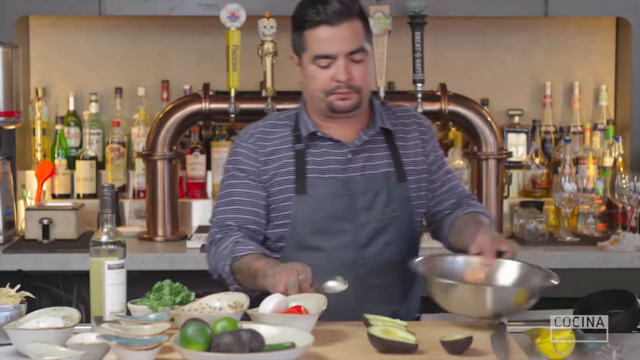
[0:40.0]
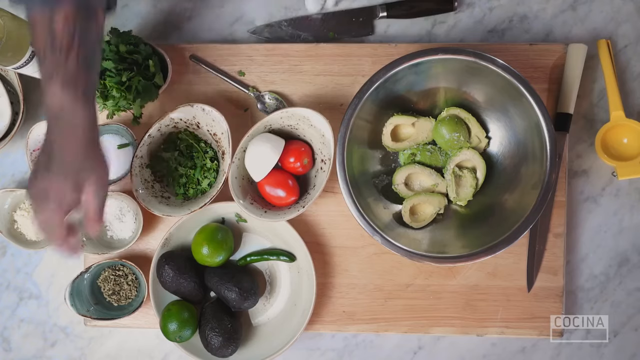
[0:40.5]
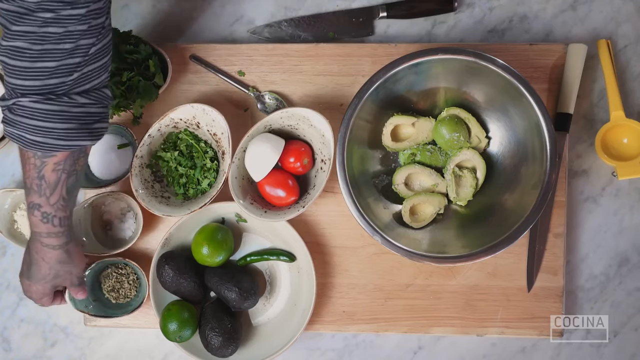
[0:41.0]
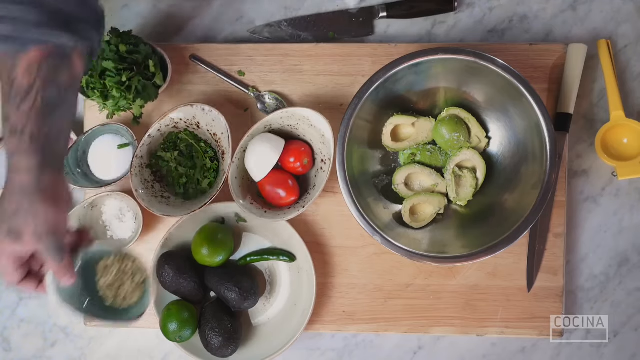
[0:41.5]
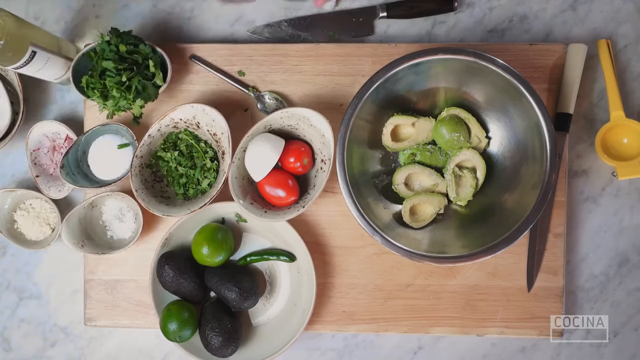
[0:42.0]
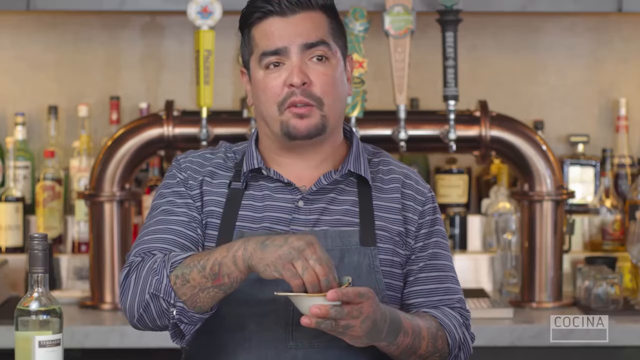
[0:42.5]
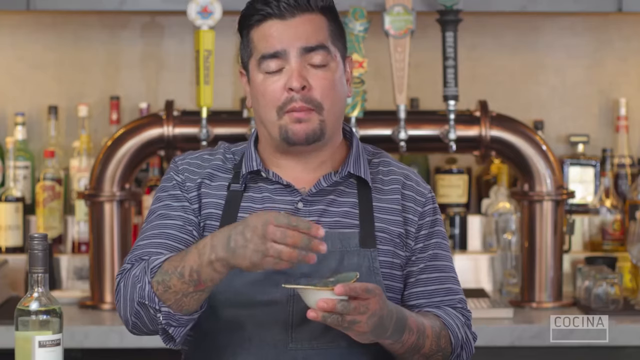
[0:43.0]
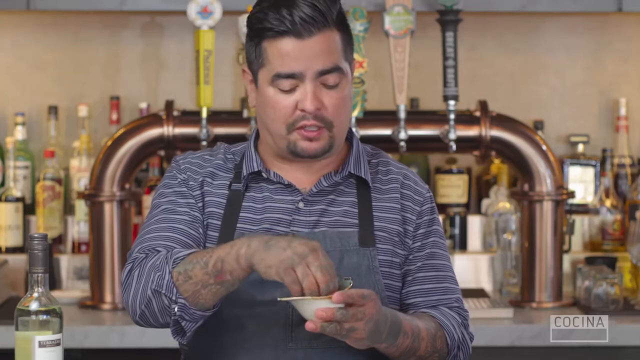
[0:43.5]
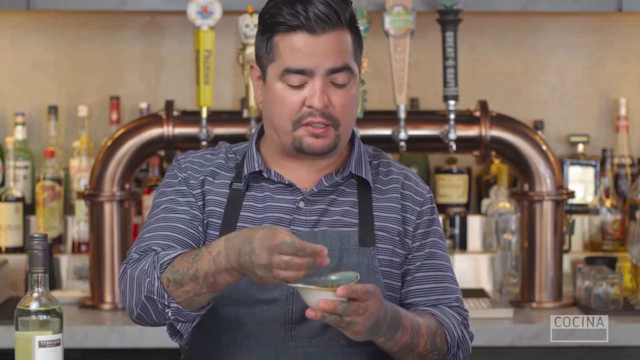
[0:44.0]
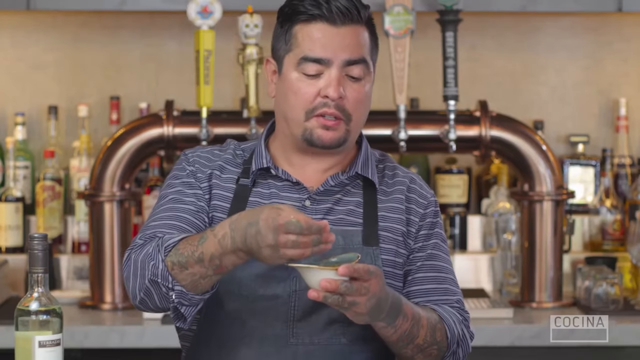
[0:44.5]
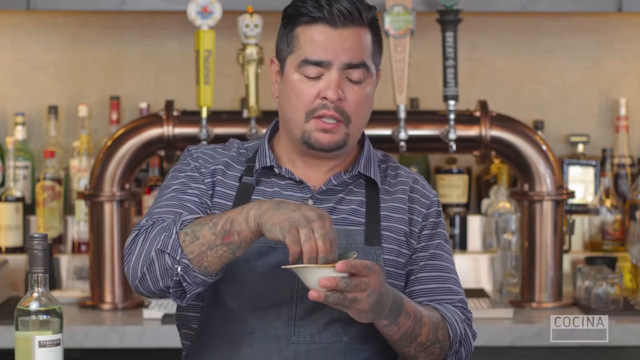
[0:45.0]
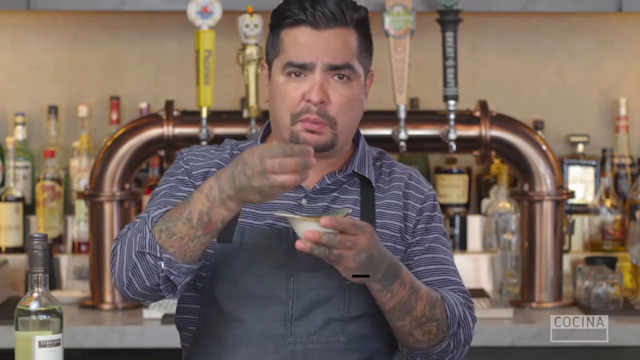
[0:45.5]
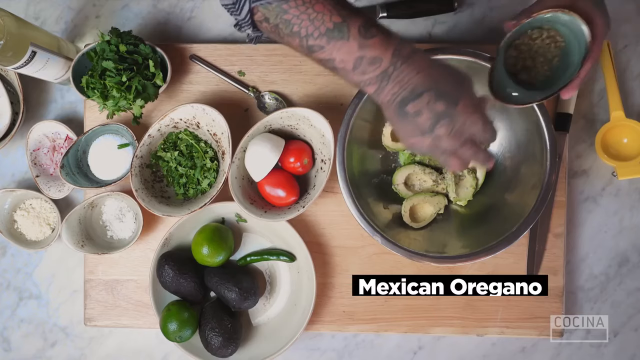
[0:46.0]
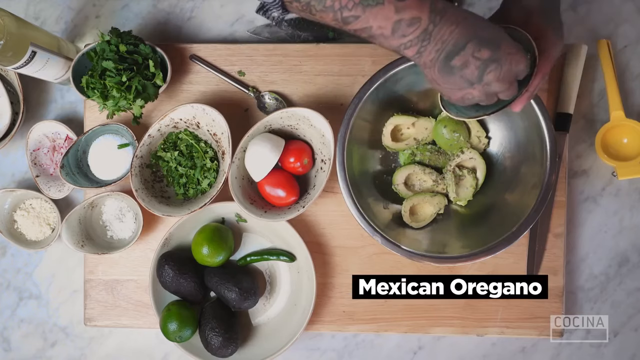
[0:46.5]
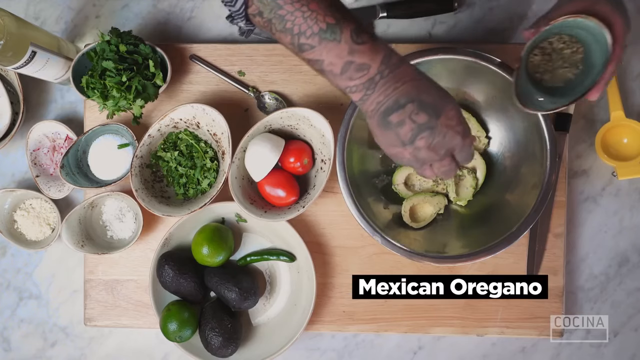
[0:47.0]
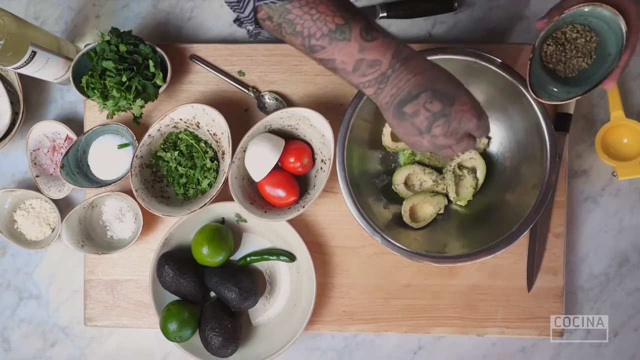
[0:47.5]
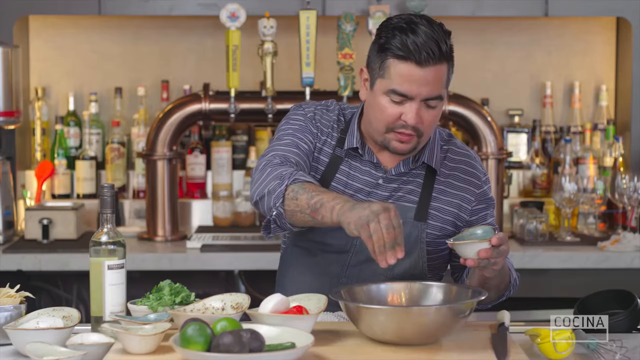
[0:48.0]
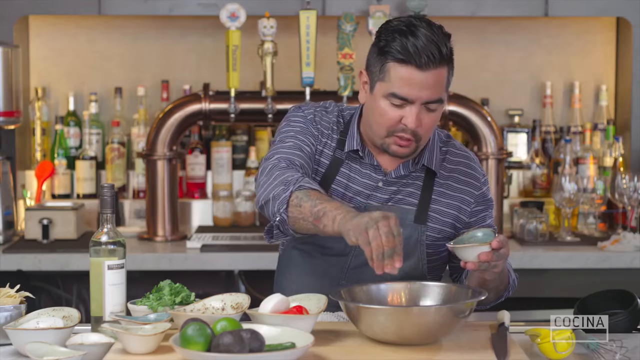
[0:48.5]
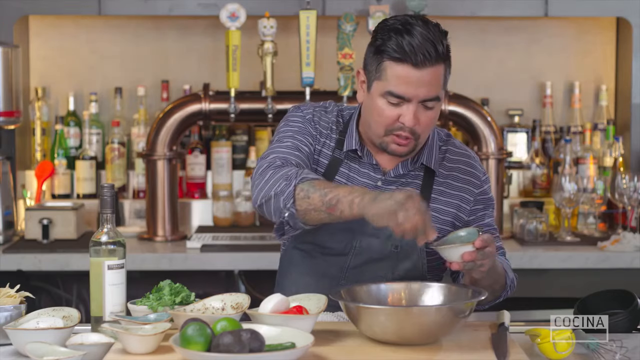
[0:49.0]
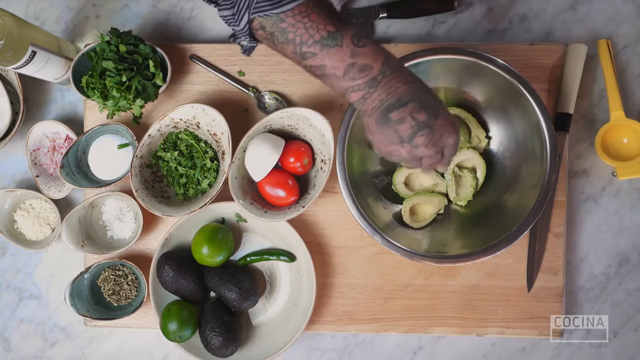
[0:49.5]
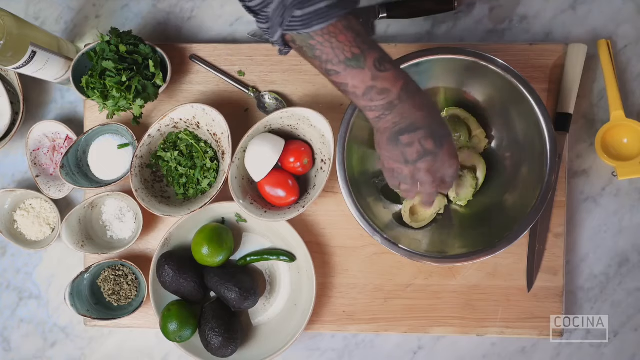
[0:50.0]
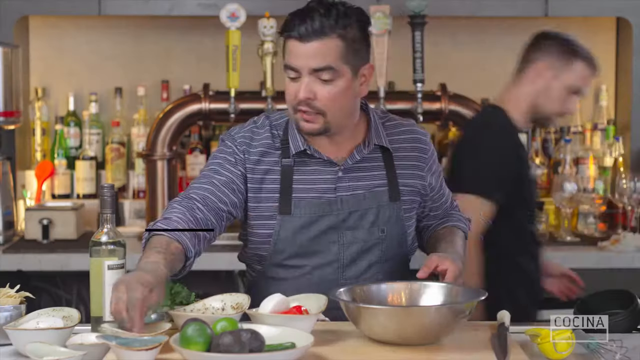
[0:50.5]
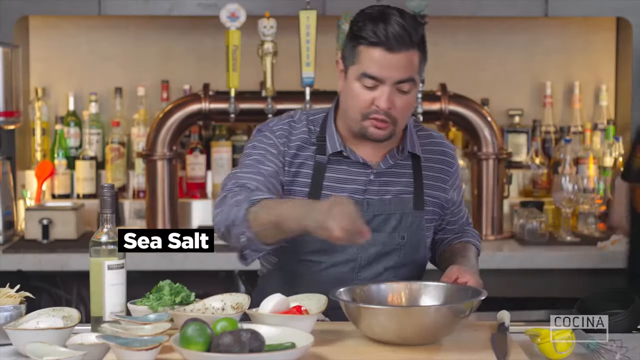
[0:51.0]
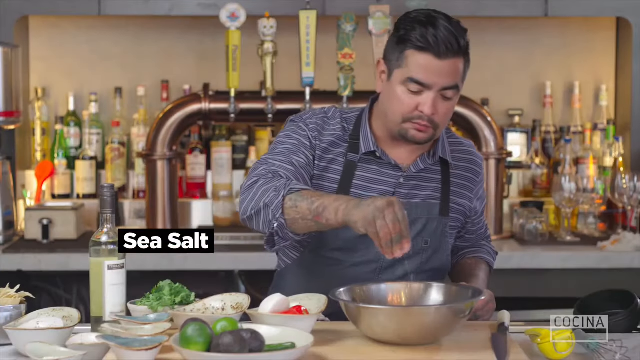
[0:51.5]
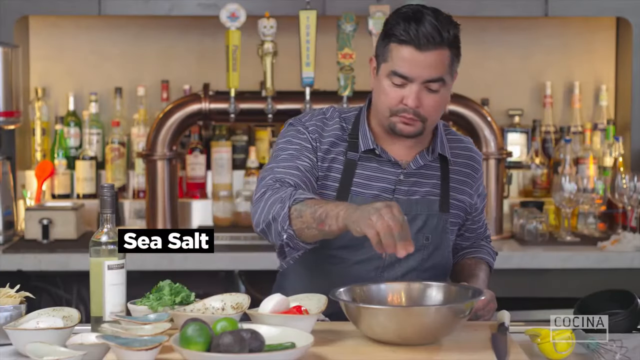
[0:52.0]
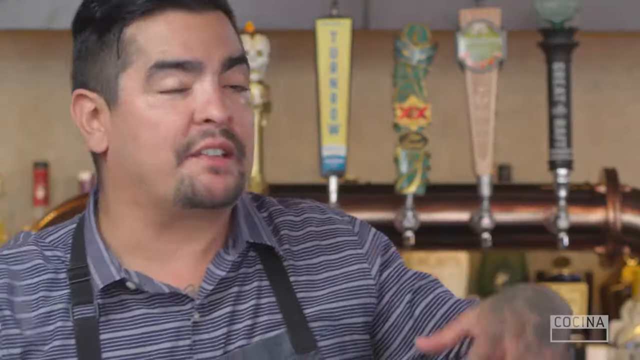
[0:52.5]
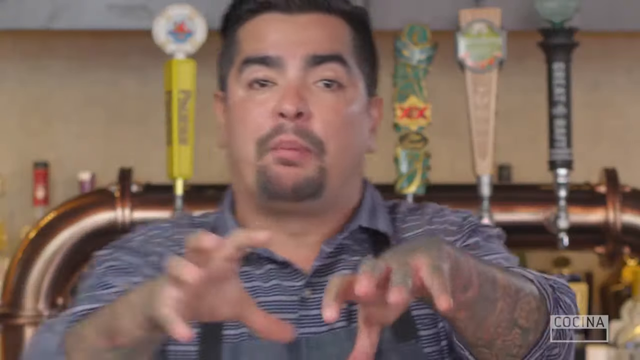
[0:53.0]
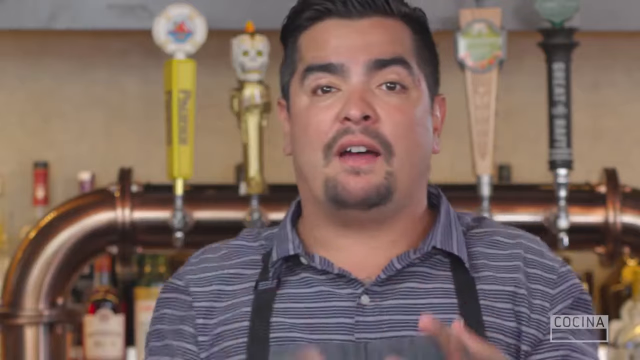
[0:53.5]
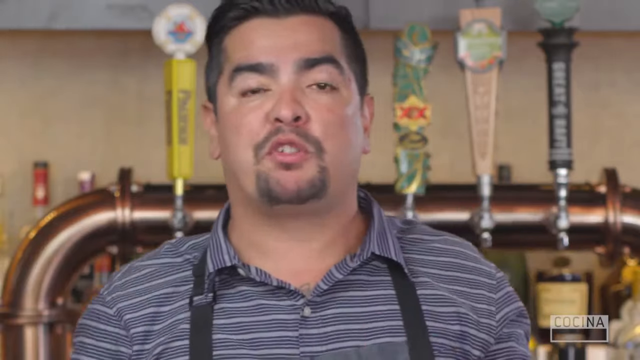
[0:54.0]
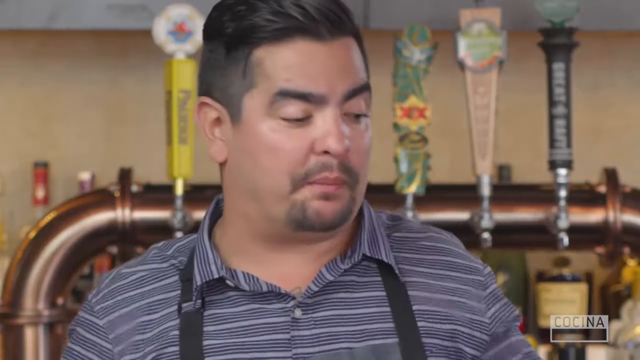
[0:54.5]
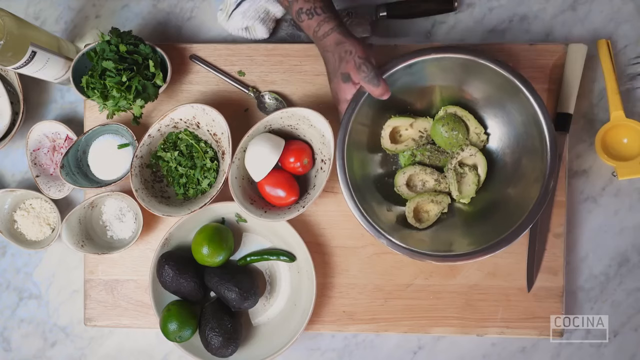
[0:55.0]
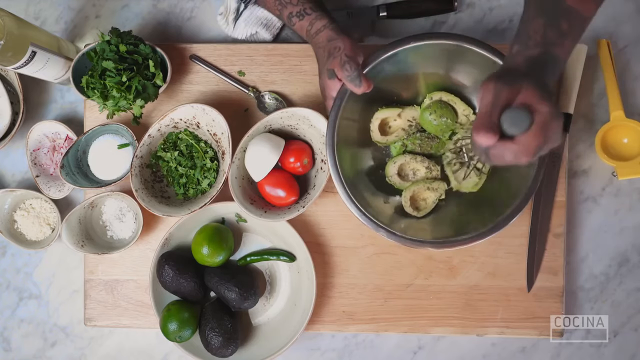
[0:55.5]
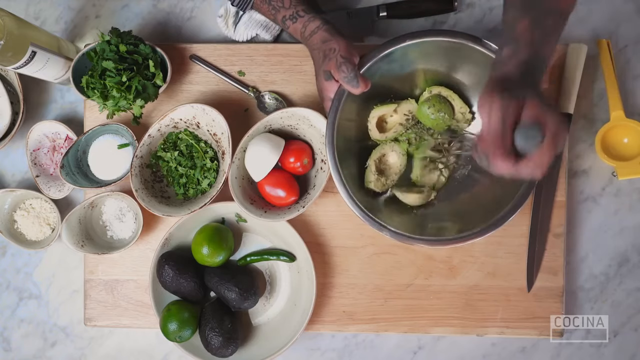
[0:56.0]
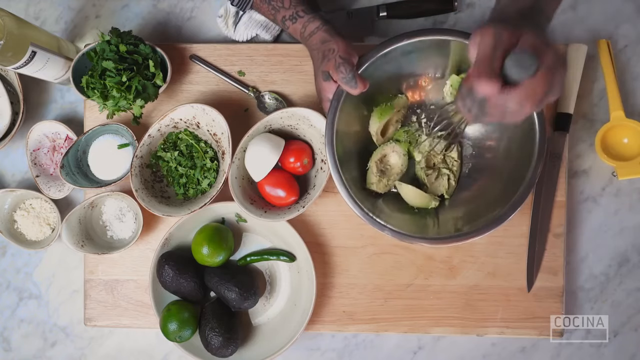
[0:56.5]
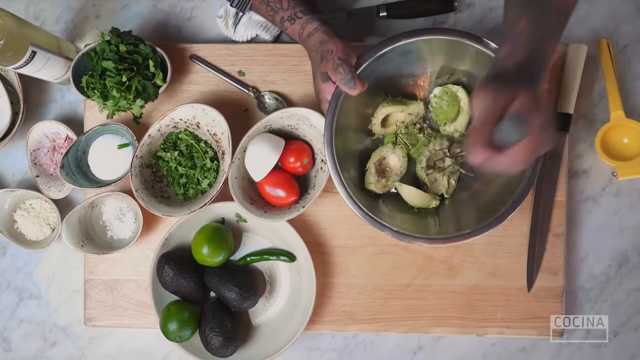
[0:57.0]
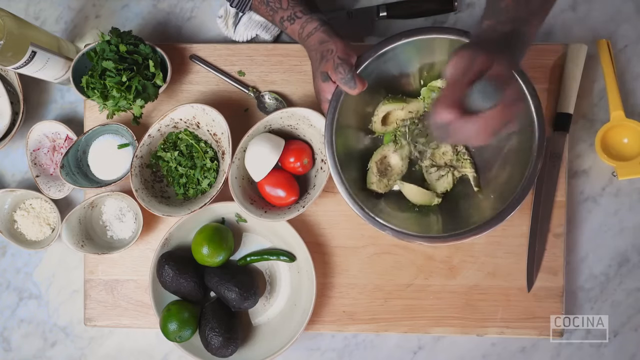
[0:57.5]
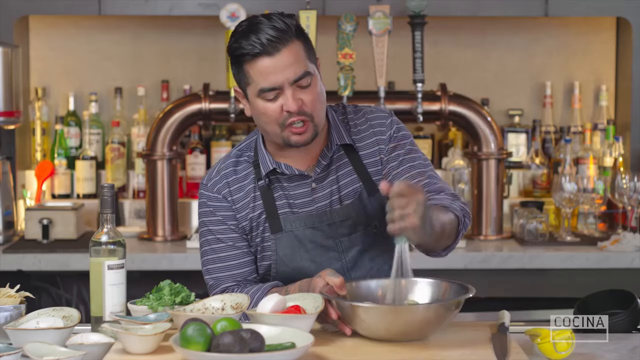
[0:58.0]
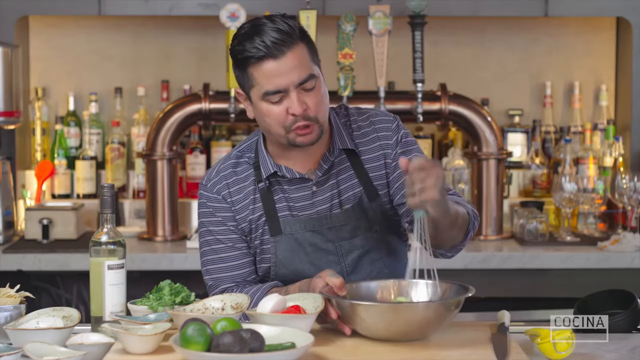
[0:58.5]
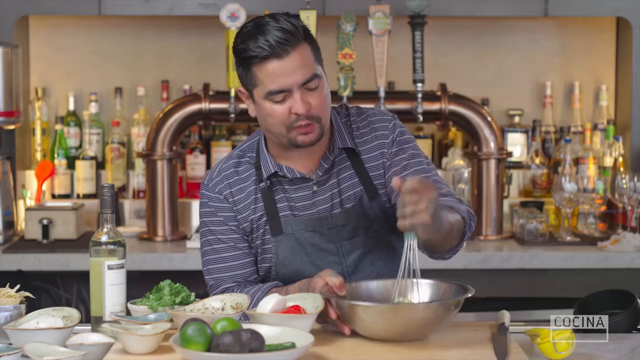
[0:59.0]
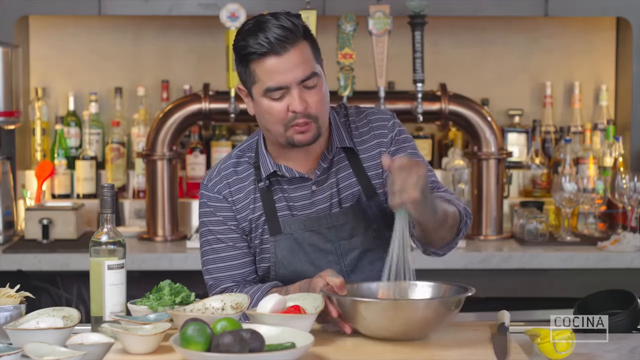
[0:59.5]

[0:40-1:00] A Mexican man who looks like a chef wears a blue apron and a blue and white striped shirt with his sleeves rolled up to his elbows; he has tattoos on his left arm. He has a large metal bowl with four chopped avocados inside. Talking, he holds a little bowl in his left hand, picks up some of its contents with his right hand and smells it, and white text reads "Mexican oregano". In a top-down view, he sprinkles the Mexican oregano over the avocado in the big silver bowl with his fingers. He then takes some white powder from one of the small ingredient bowls and sprinkles it in, with white text reading "sea salt", spreading it into the avocados. He gestures with his hand and talks to the camera. He then takes what looks like a steel beater or egg beater and, holding it in his left hand, smashes the avocados in the silver bowl while talking.